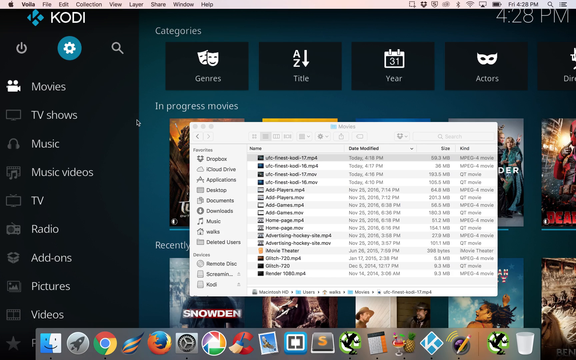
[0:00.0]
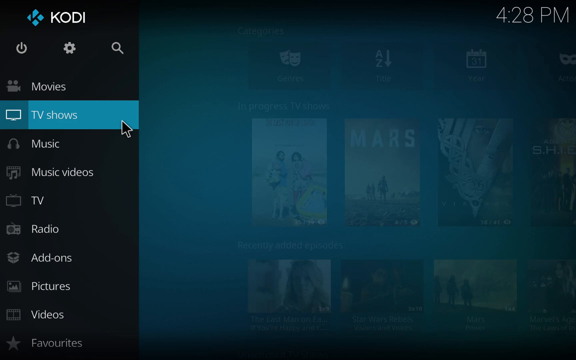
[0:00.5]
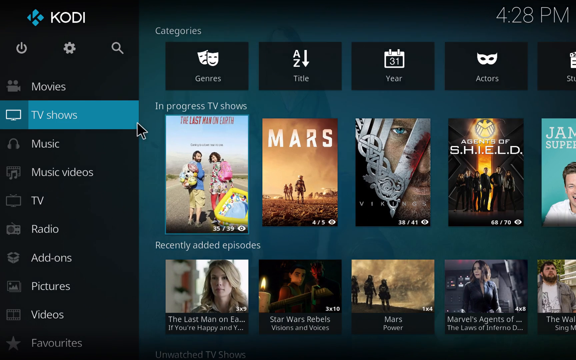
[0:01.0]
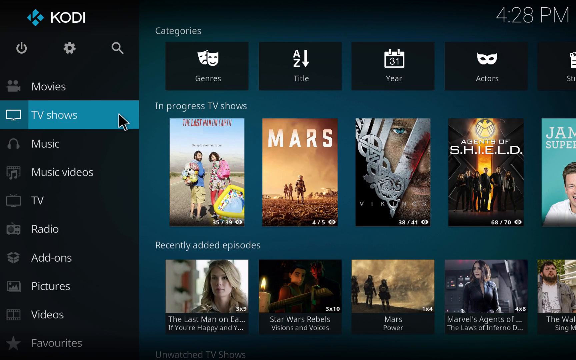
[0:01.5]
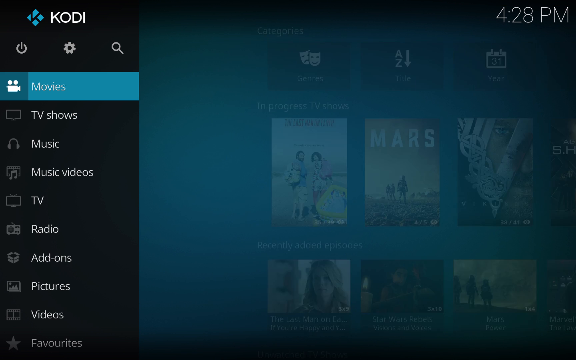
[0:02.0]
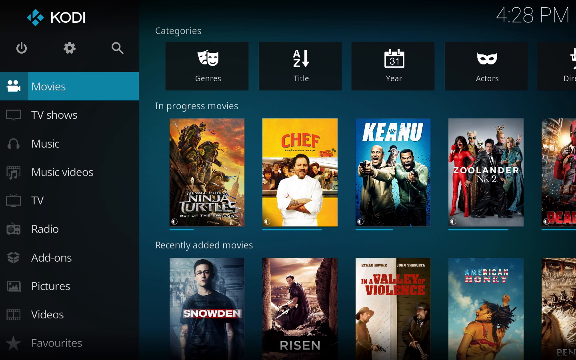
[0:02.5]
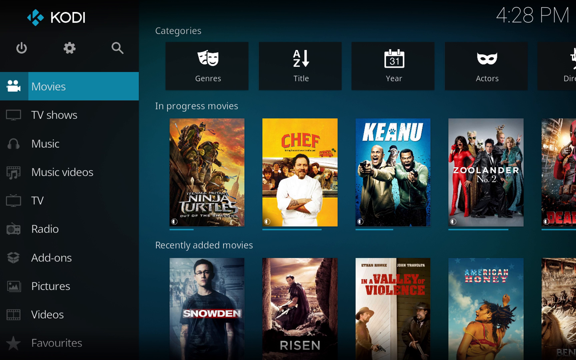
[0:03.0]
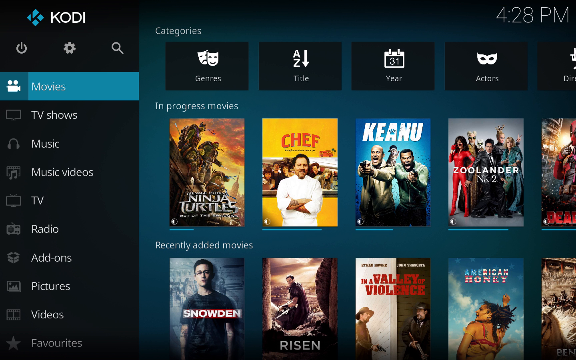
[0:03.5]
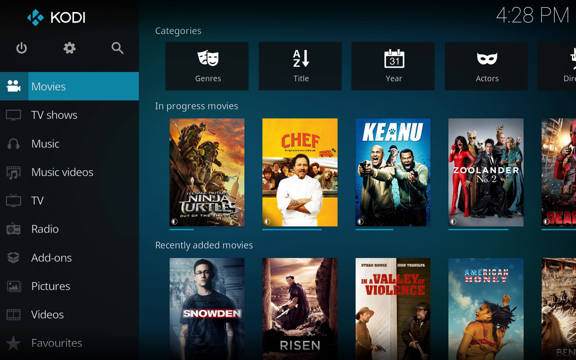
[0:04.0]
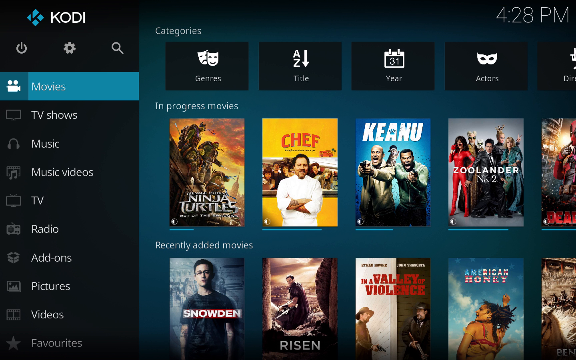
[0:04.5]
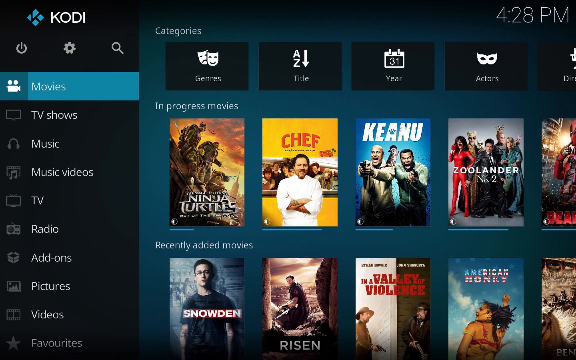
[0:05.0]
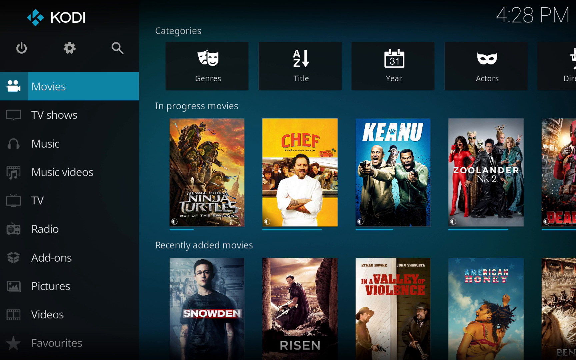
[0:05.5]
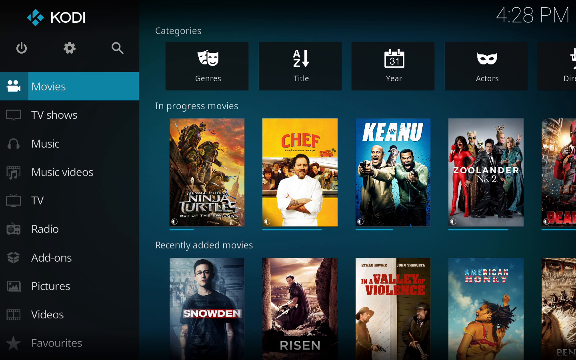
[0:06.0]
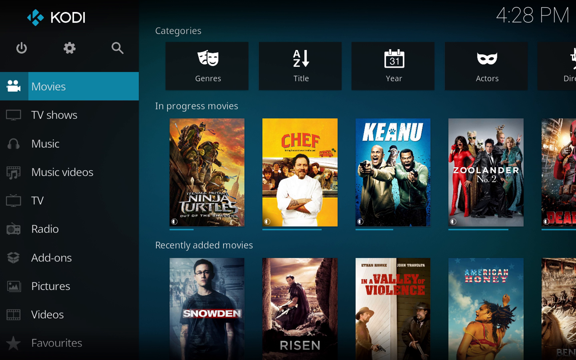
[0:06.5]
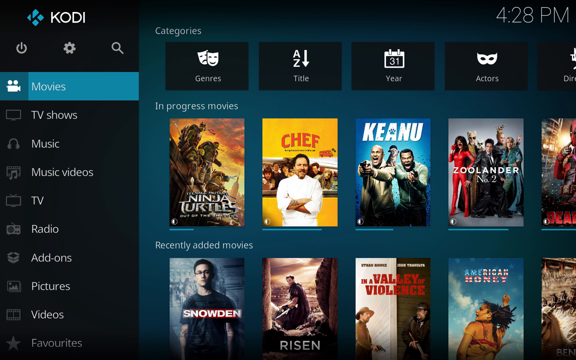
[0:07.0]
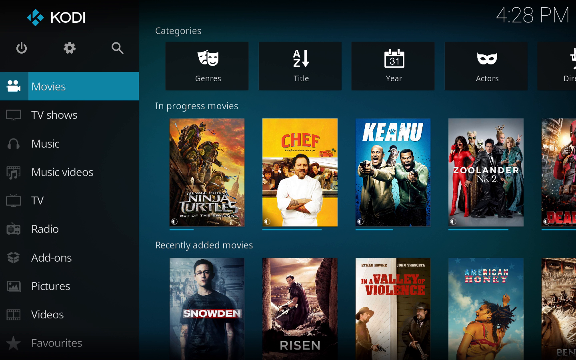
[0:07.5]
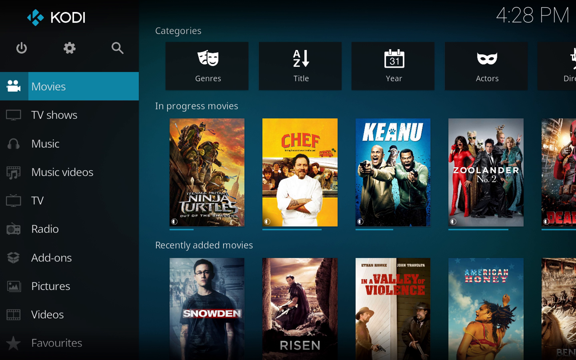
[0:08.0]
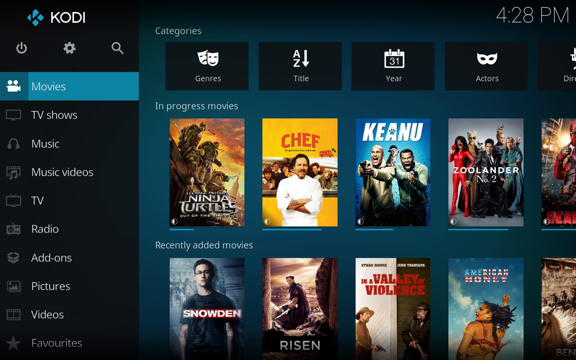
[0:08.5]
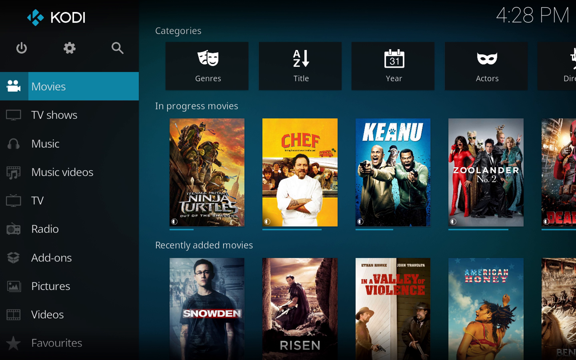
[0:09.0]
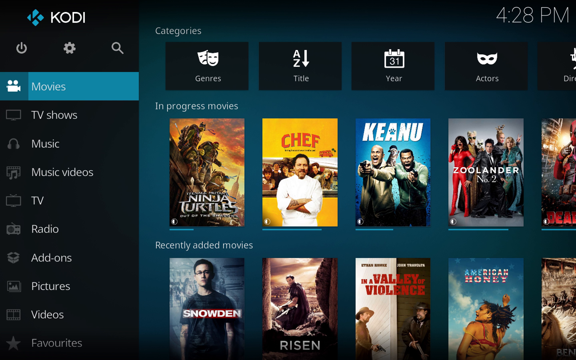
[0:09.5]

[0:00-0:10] A window page of the Kodi app is shown, with a dark background and peacock green color. The screen is divided into two parts: a small side panel with options such as power off, settings and search, followed by categories such as movies, TV shows, music and TV; the second part shows categories, in-progress movies and so on. First, TV shows is clicked in the left pane, and in-progress TV shows appear on the second part of the screen. Then the movies tab is clicked in the left pane, showing in-progress movies. The movies and TV shows are displayed with pictures and show names and are very colorful.